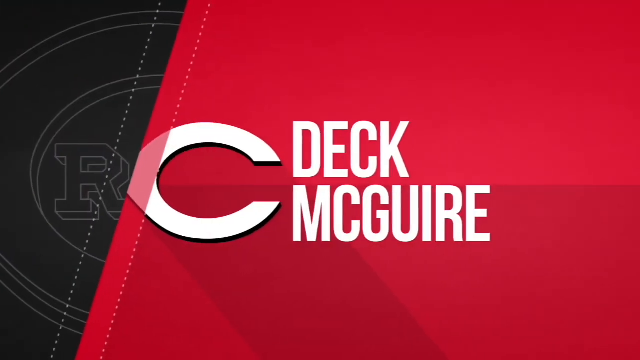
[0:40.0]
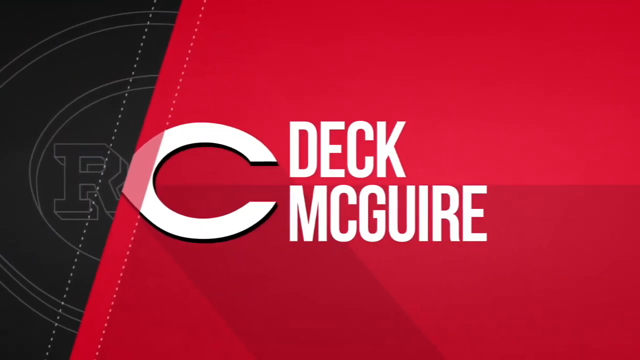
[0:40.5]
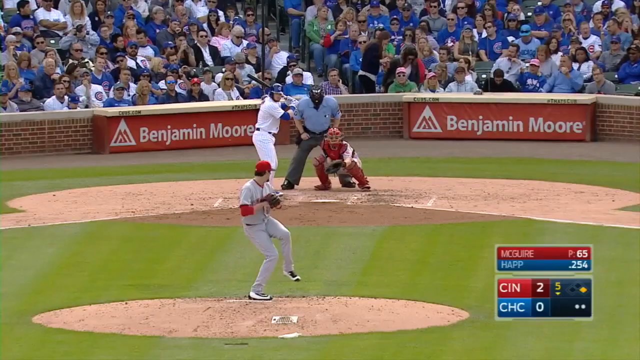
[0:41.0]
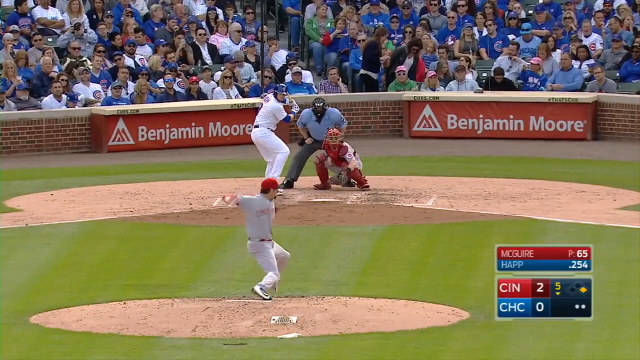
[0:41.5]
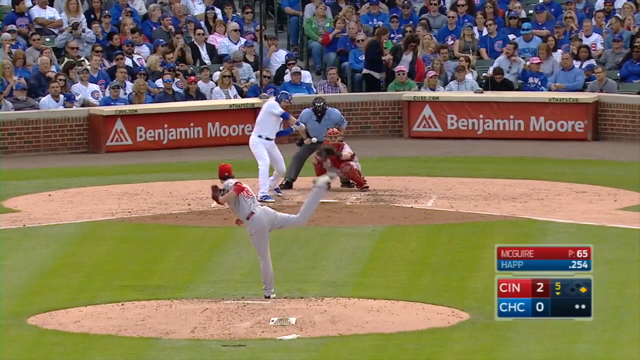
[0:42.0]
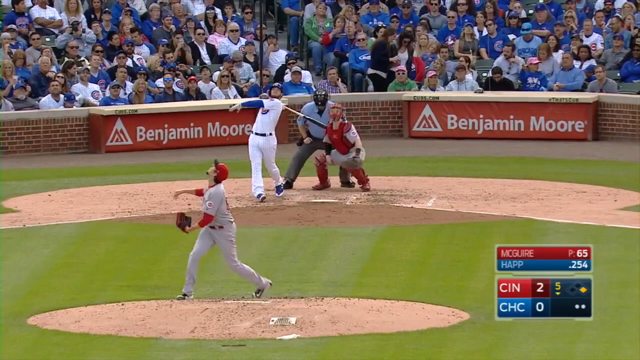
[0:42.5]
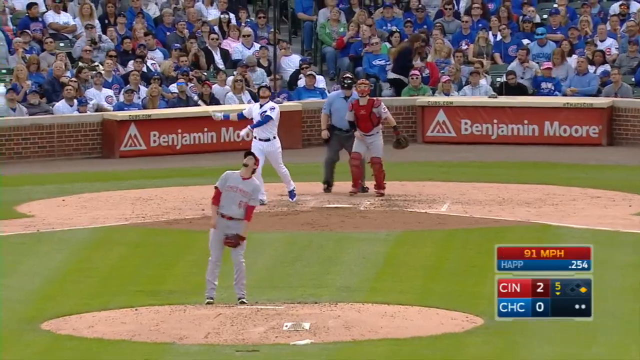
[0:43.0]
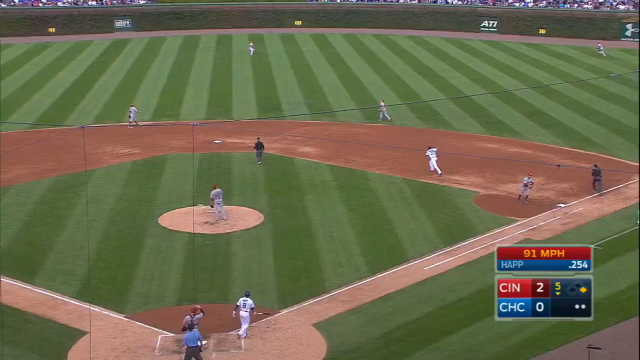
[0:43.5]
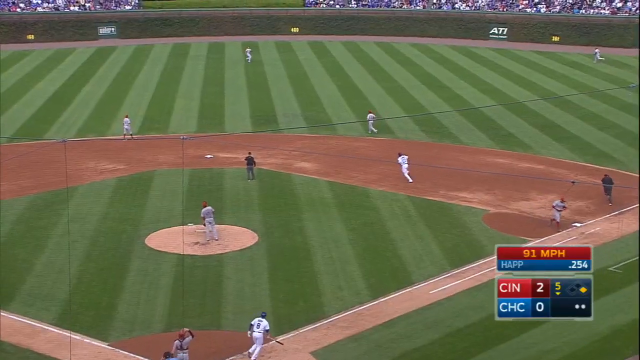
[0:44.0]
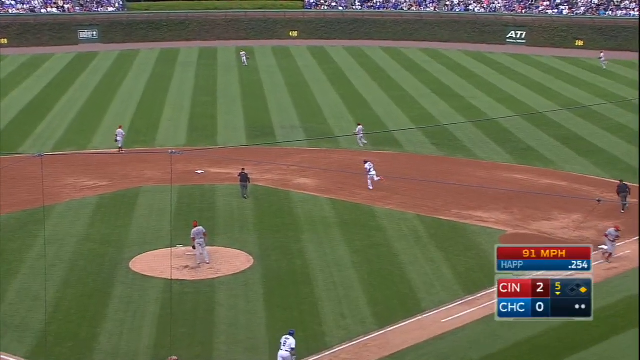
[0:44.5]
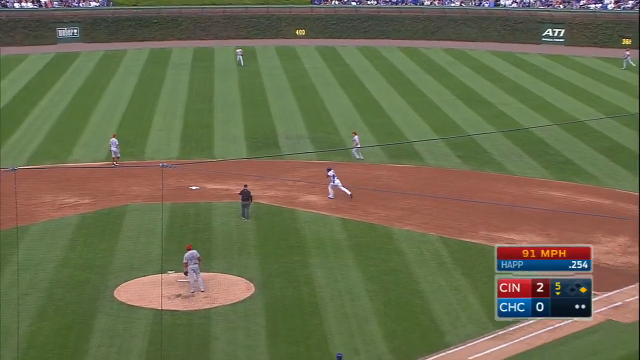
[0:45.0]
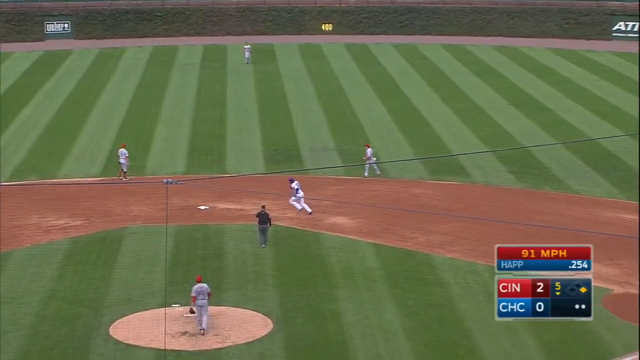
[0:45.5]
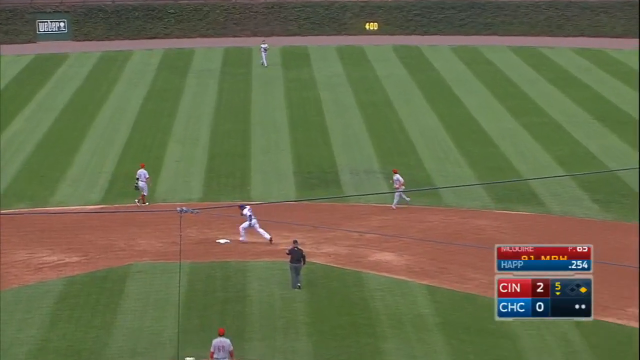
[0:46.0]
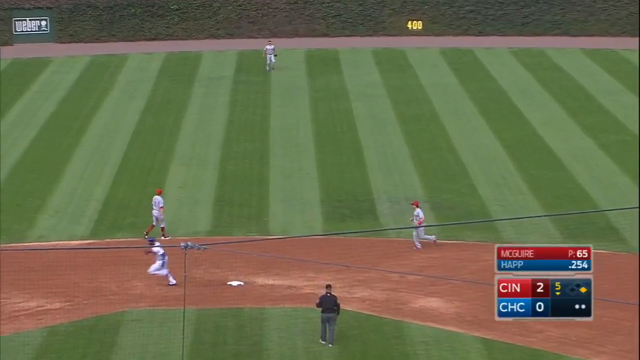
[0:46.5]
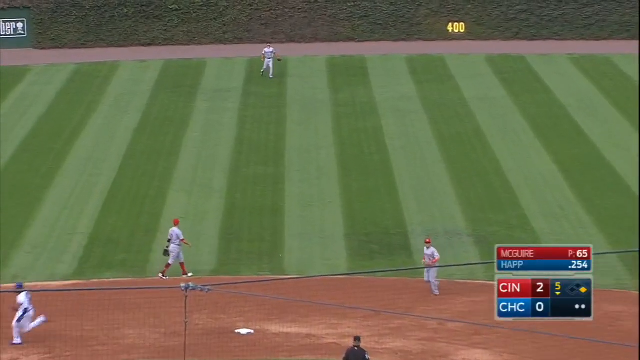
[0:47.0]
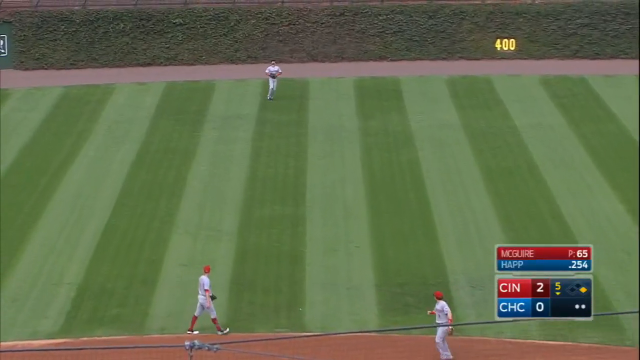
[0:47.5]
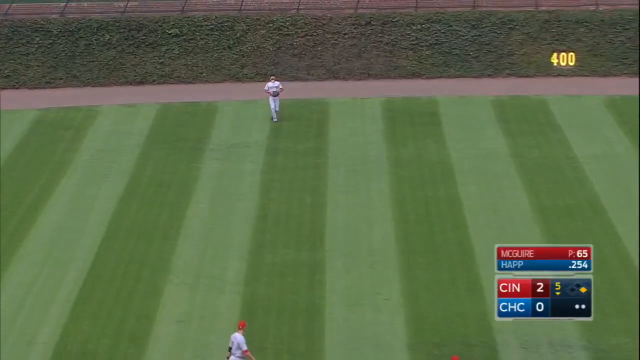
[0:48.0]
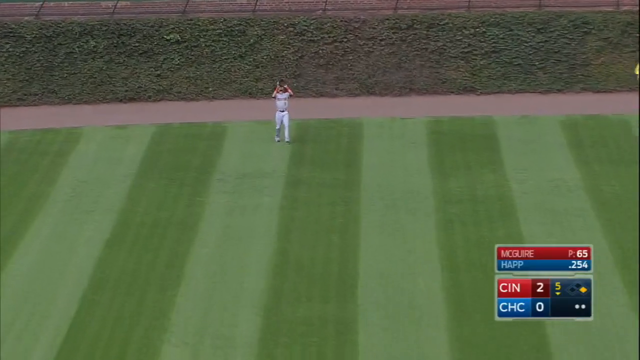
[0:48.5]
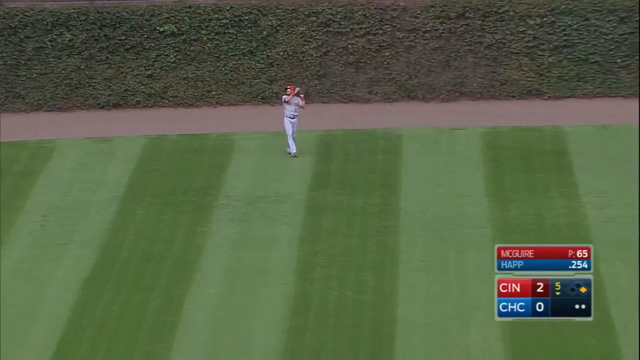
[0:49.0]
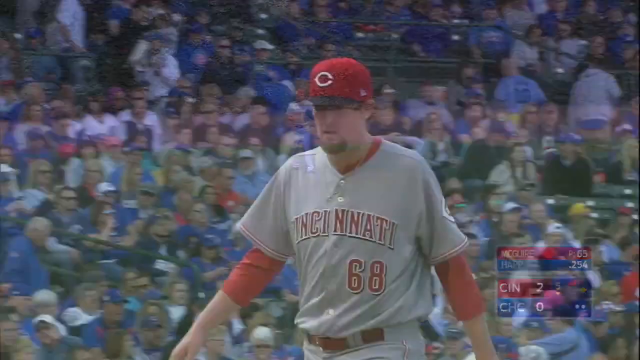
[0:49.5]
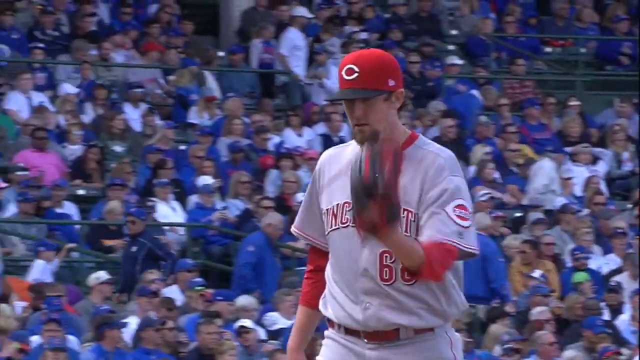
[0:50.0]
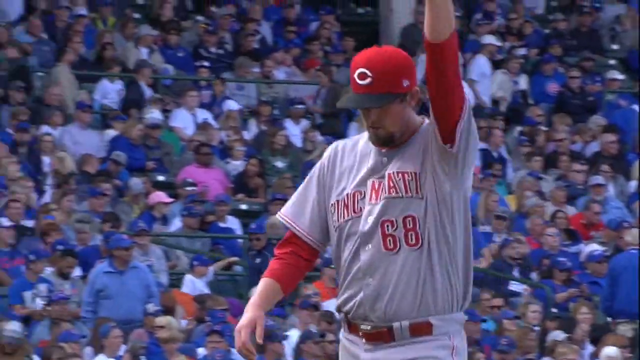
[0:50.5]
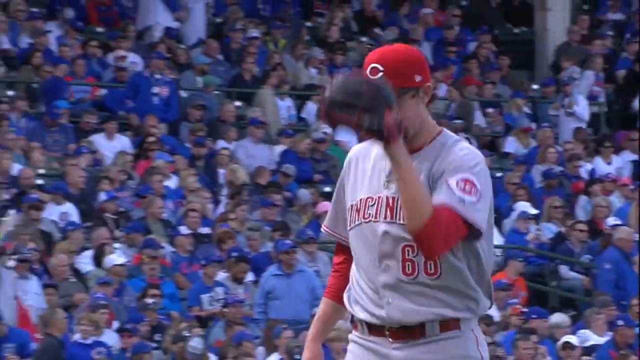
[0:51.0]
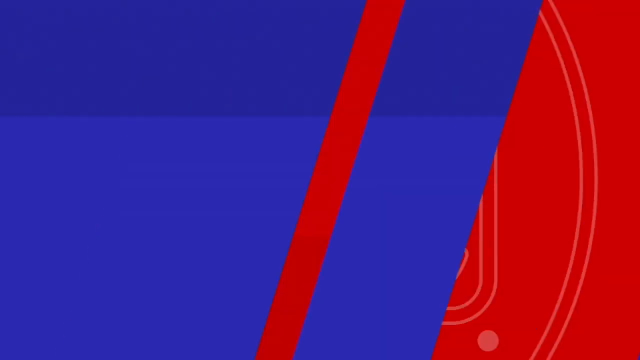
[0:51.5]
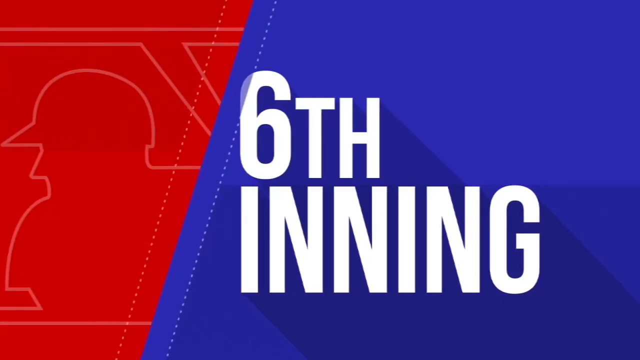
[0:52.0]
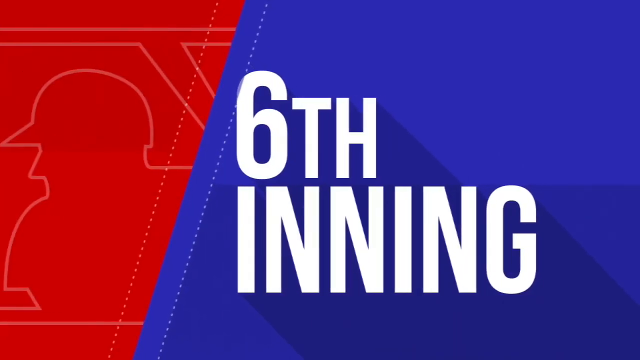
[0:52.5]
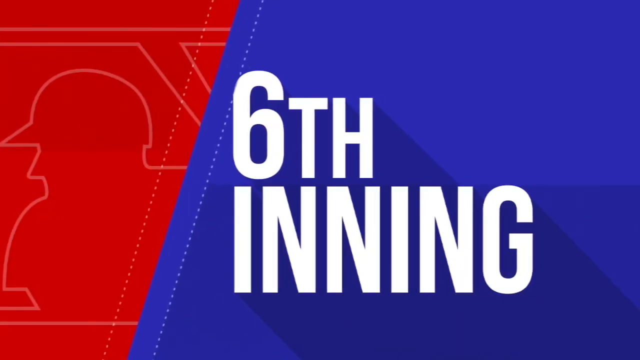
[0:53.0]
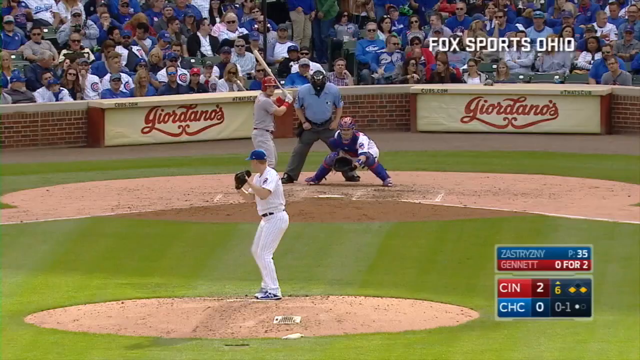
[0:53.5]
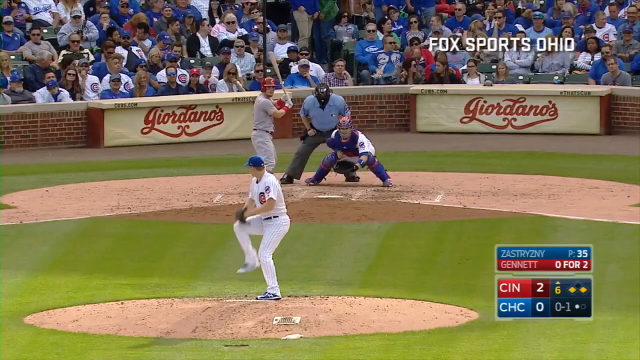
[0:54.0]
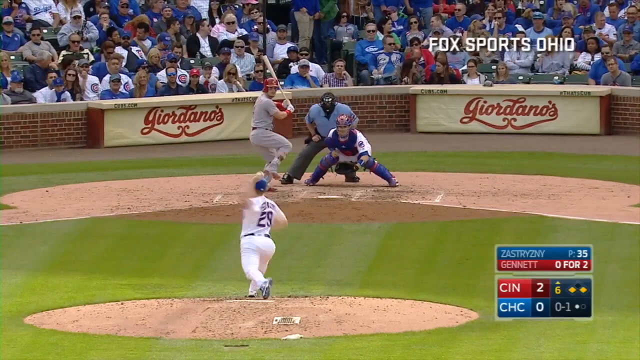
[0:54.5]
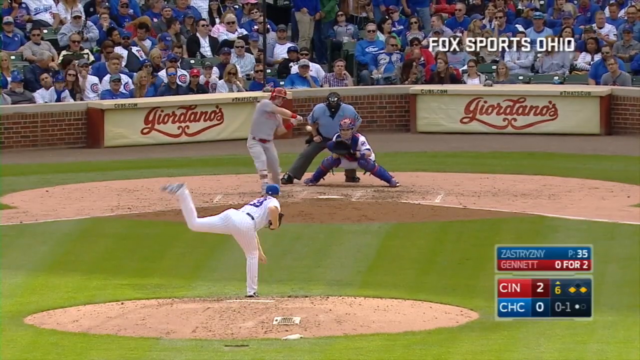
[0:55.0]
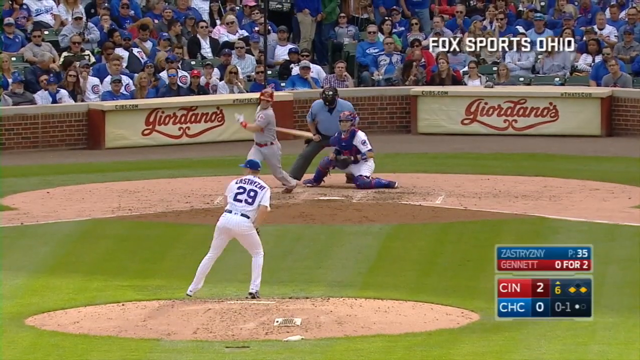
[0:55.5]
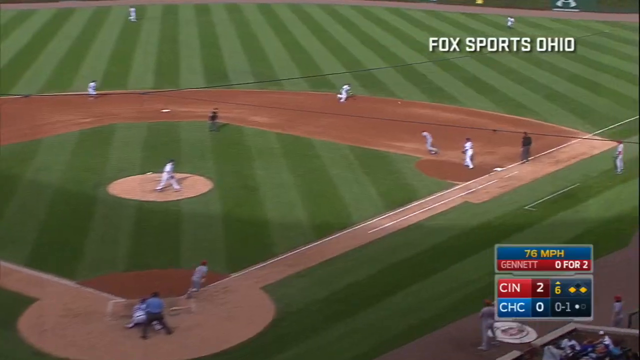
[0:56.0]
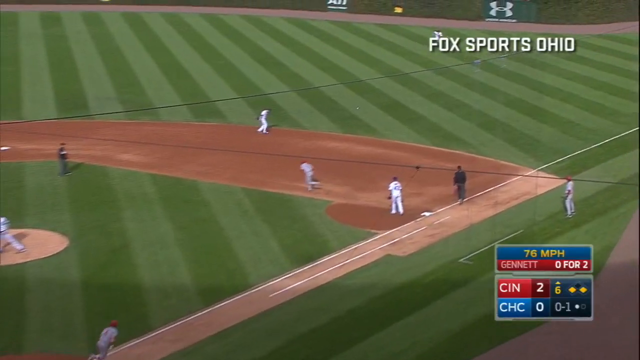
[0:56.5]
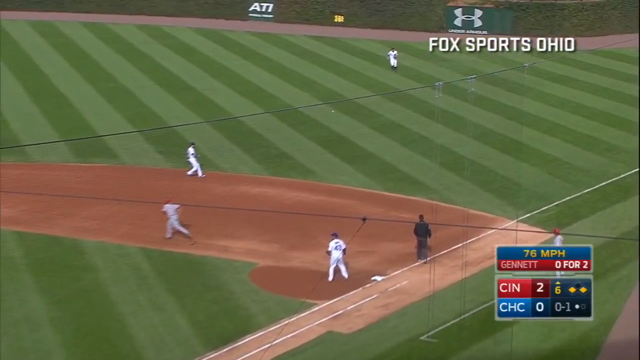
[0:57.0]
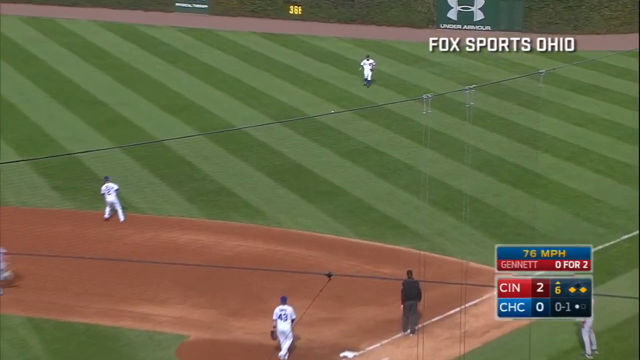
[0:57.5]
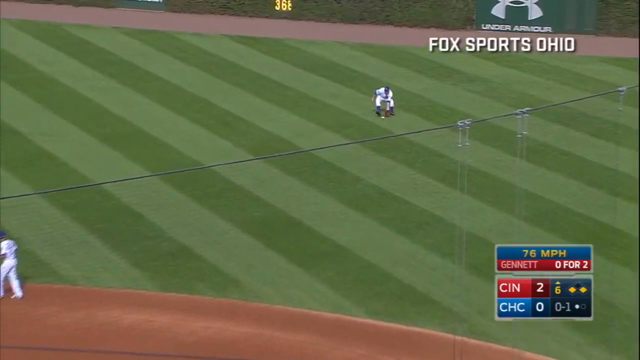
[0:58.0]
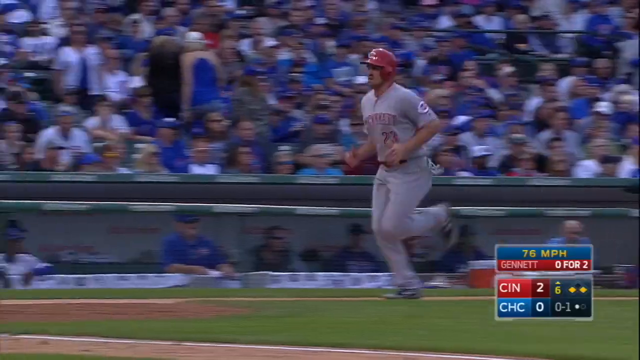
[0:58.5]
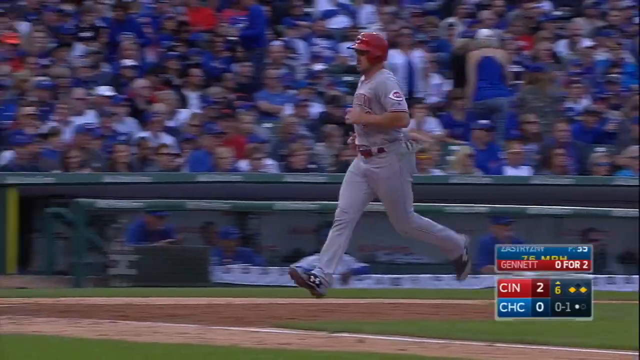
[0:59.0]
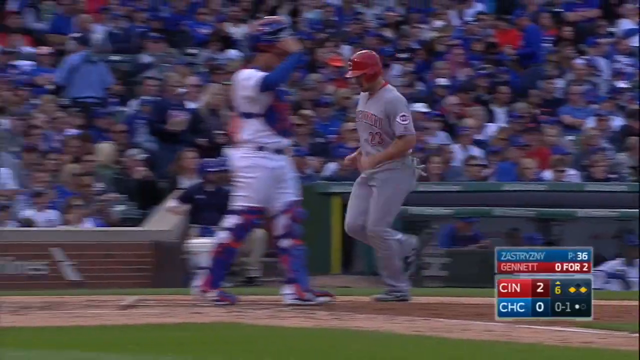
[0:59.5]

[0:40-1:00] A graphic appears with about a fifth of the screen black and a diagonal running from left to right and bottom to top. On the right side is a red C and the name "Dick McGuire". In the bottom right of the screen is a small square graphic: the top red bar reads "Maguire" and "P65", and the blue bar below reads "HAP" and ".254", with the names at the left end of the bars and the numbers at the right end. Below that, in the same square, are "CIN" and "CHC", with 2 against CIN and 0 against CHC; the 2 is in slightly darker red shading and the 0 in a slightly darker blue box, both in white font. The picture shows a pitch to a left-handed batter, which may be Maguire. The catcher is in place, ready to take the ball if the batter misses, and the umpire stands with legs spread and hands just below his waist. The batter makes contact, and the ball appears to go straight up into the air as everyone involved turns their heads to look straight up. In the foreground is a green striped playing area, and in the background, just before the edge of the playing area, a fielder waits for the ball to come down and takes the catch comfortably.